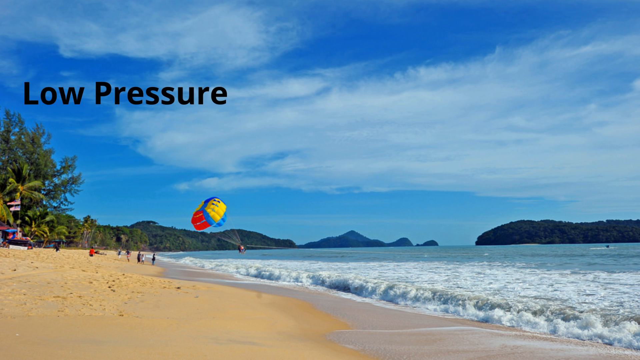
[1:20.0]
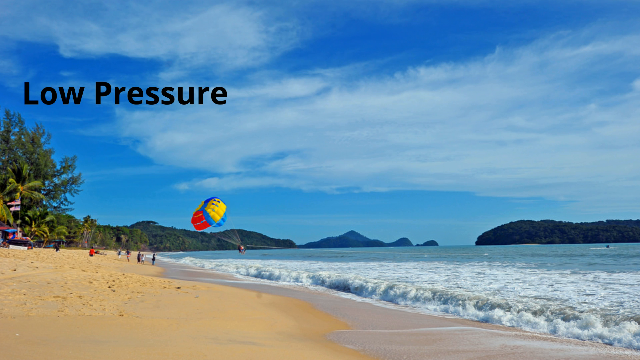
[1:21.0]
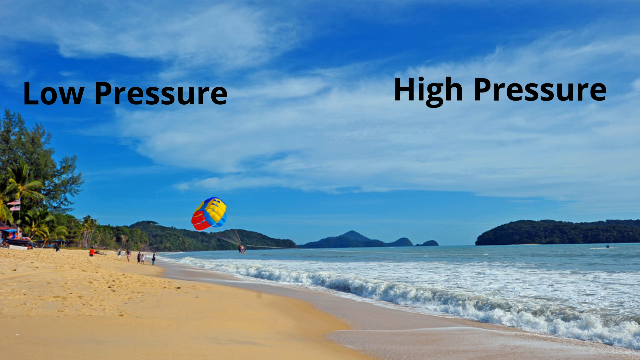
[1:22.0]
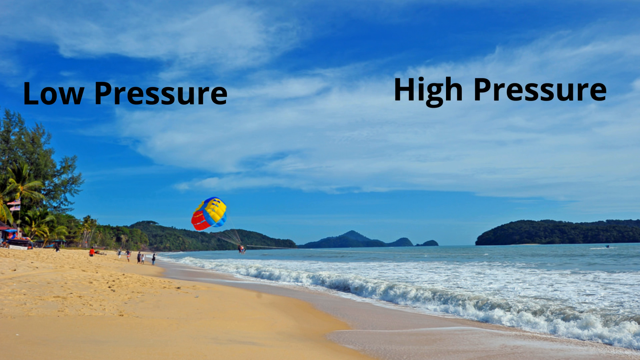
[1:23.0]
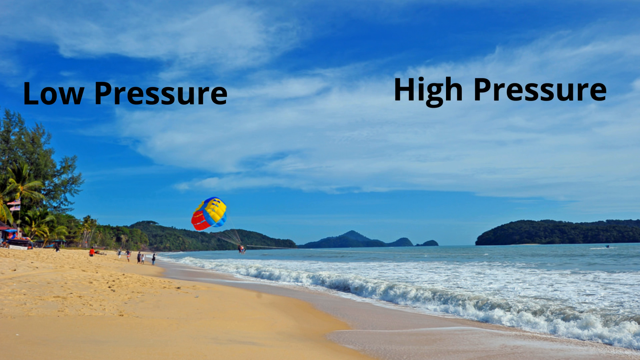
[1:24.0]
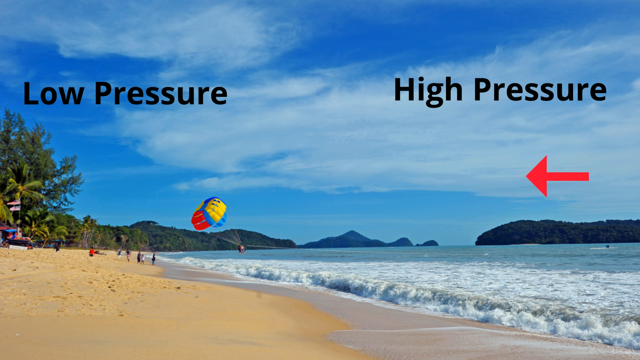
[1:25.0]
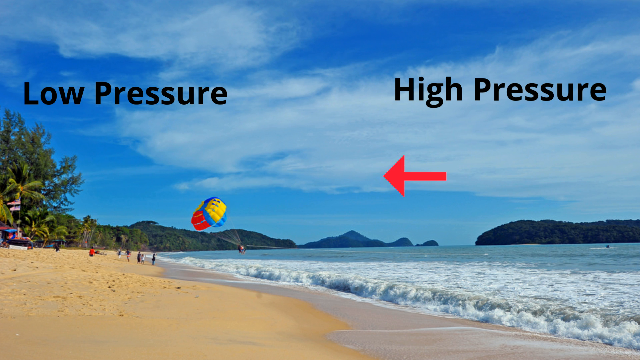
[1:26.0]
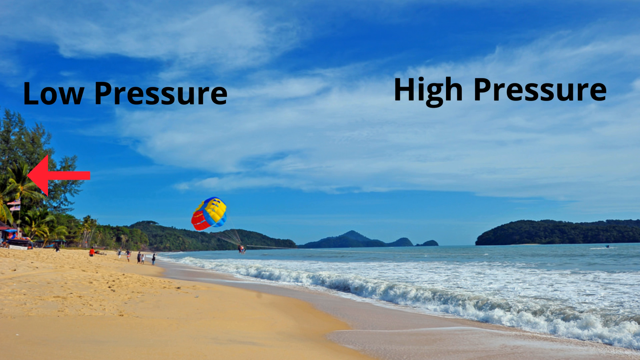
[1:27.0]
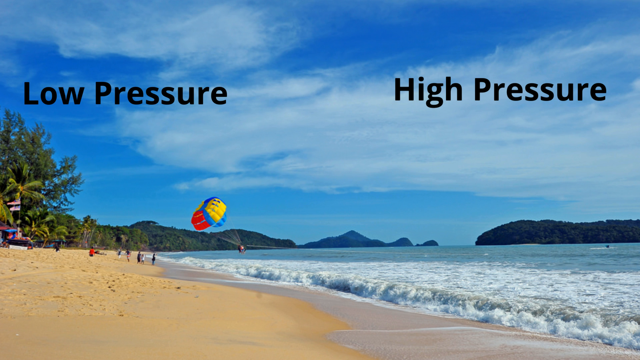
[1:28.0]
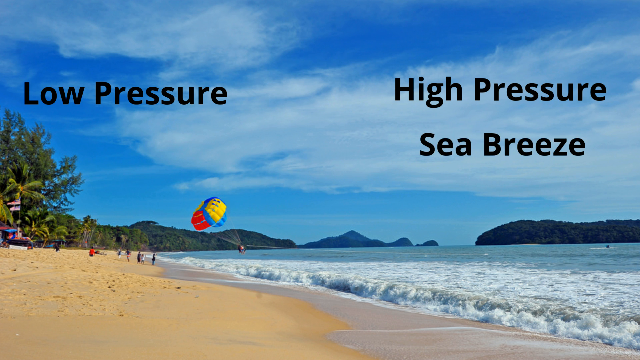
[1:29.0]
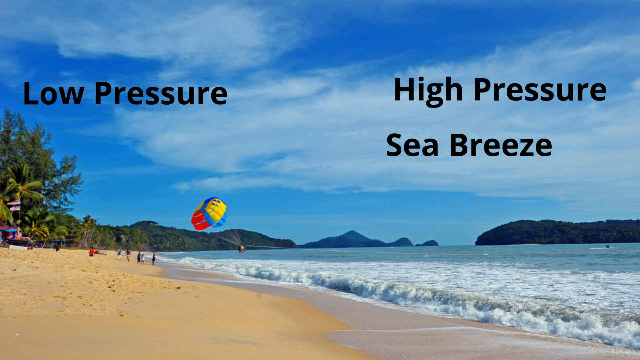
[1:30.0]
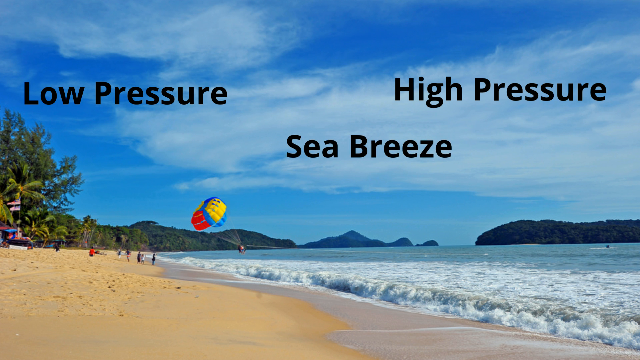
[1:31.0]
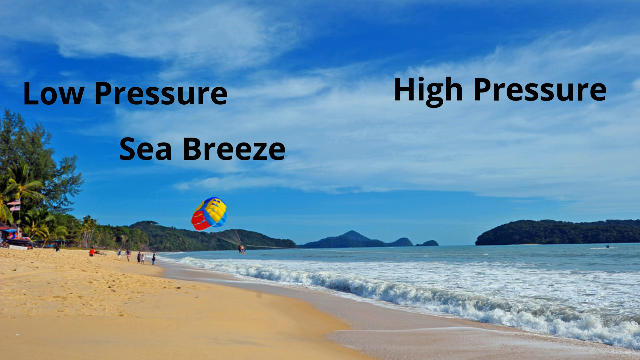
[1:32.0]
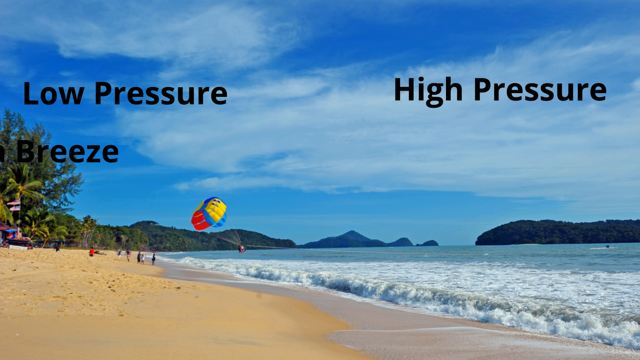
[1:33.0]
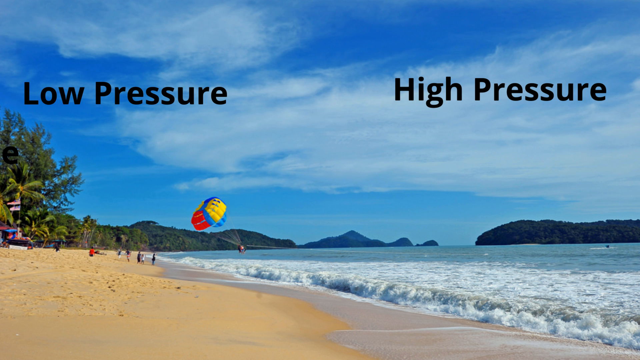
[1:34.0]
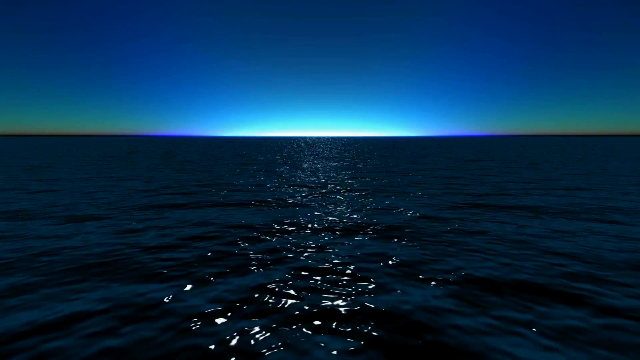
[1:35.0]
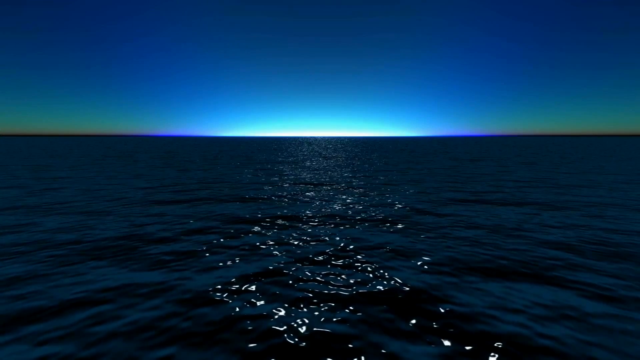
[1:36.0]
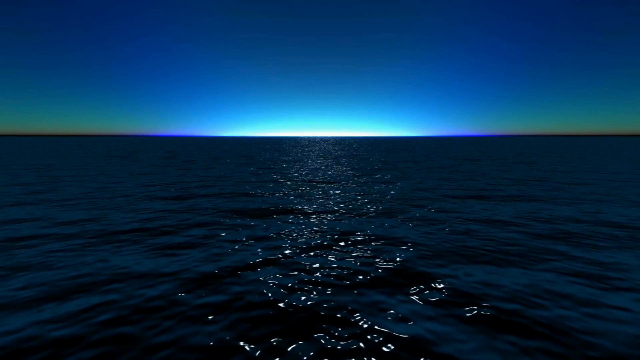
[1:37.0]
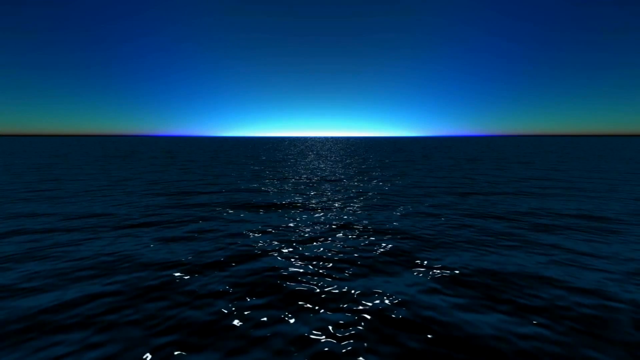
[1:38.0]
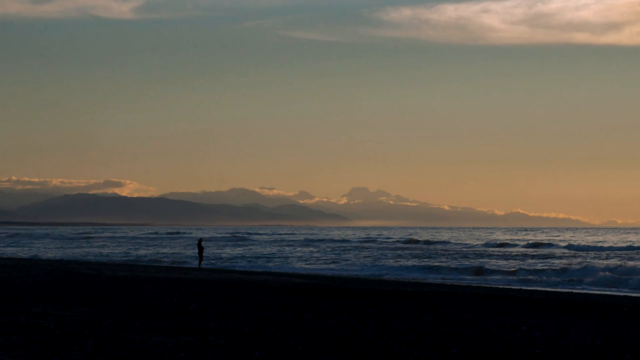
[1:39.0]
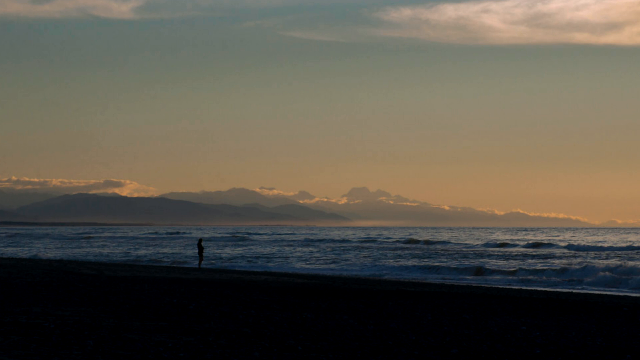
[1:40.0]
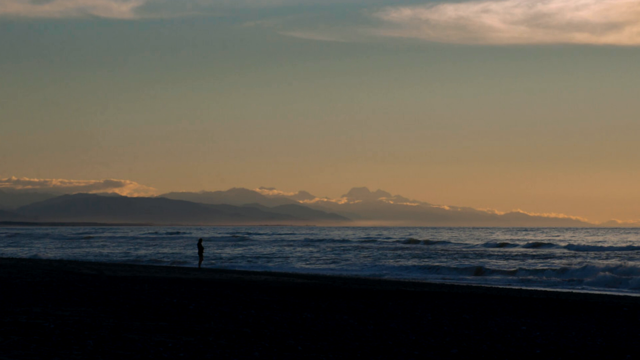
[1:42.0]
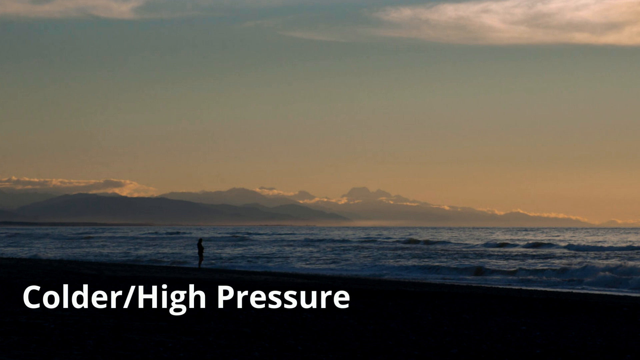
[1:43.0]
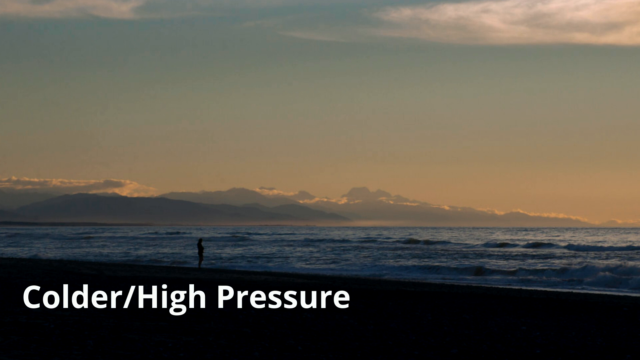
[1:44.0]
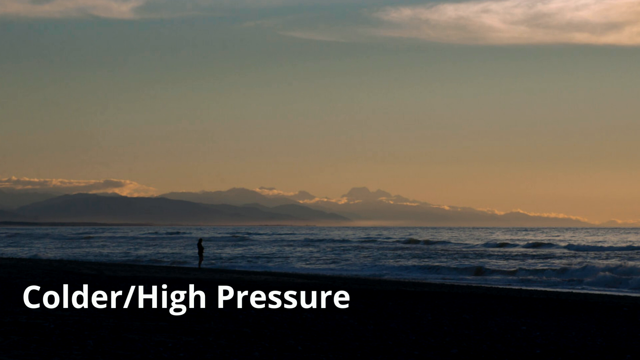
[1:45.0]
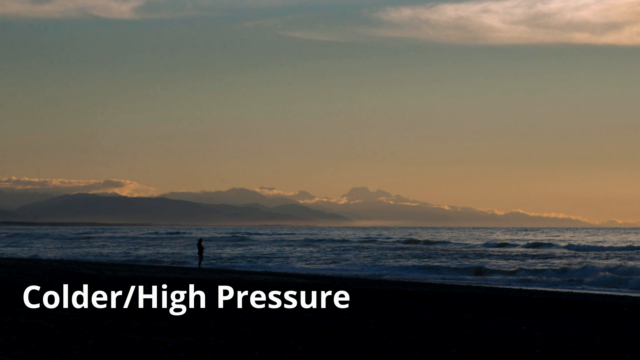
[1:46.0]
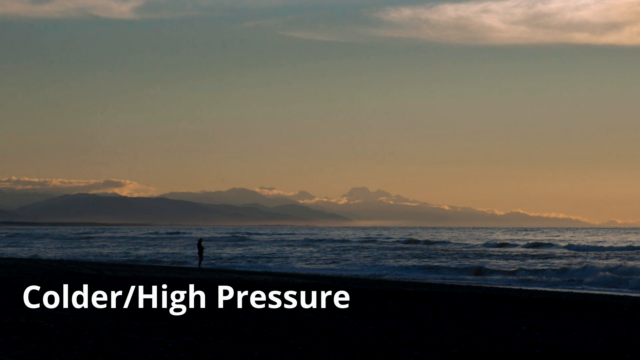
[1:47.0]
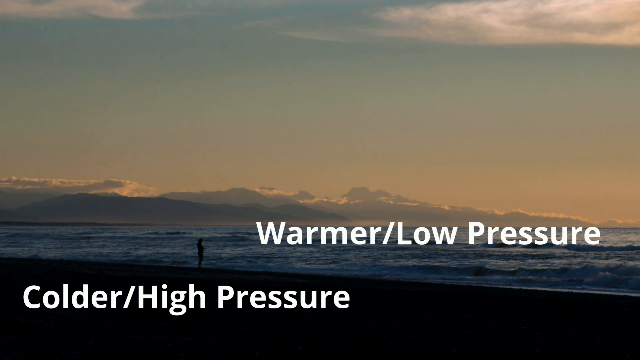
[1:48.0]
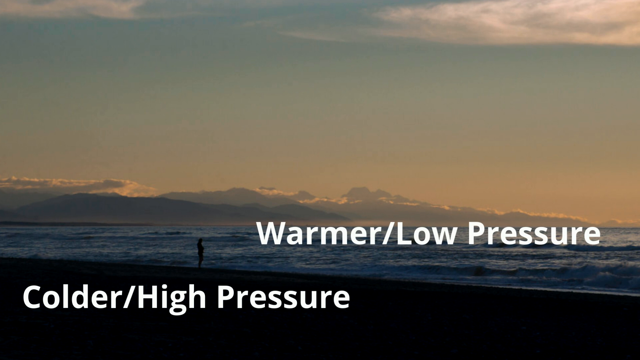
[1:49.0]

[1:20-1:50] The words "low pressure" and "high pressure" are shown in black text, "low pressure" on the left-hand side of the screen and "high pressure" on the right-hand side. Behind the text is a beach scene with multiple people sitting on the beach in the distance and what looks like one person parasailing over the water. The parasail is red and yellow with a blue stripe through the middle. In the far distance are a bunch of palm trees, mountainsides, and blue cloudy skies. A red arrow appears on the right-hand side of the screen facing left, moves toward the left side of the image, and disappears. The words "SEA BREEZE" appear in black text on the right-hand side, then slide over to the left side and disappear.